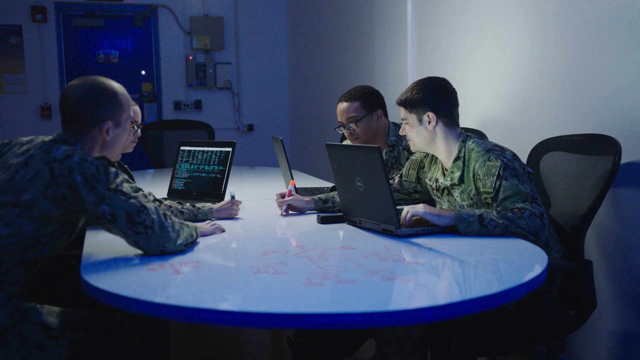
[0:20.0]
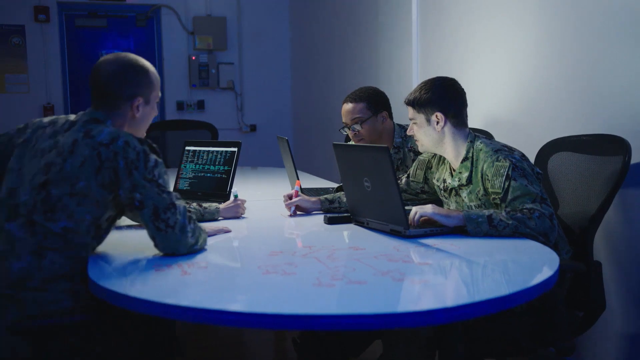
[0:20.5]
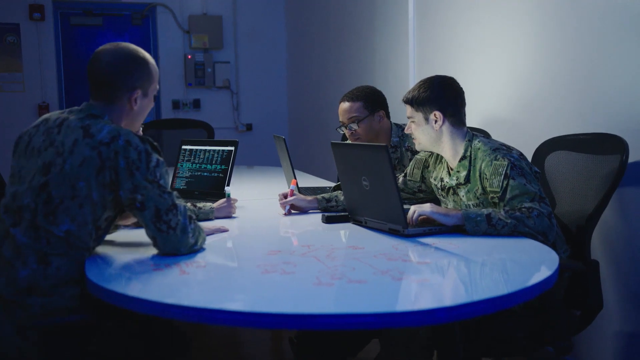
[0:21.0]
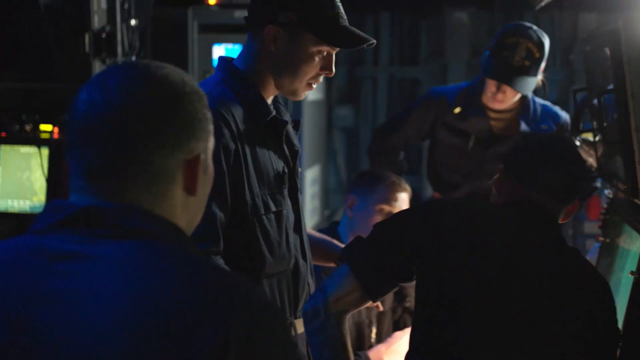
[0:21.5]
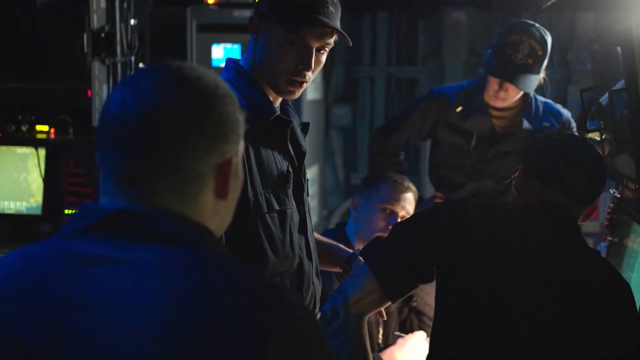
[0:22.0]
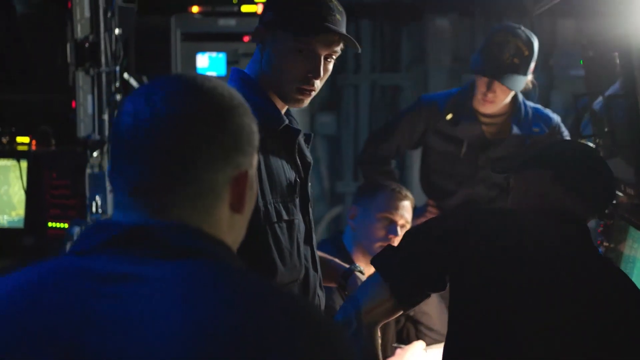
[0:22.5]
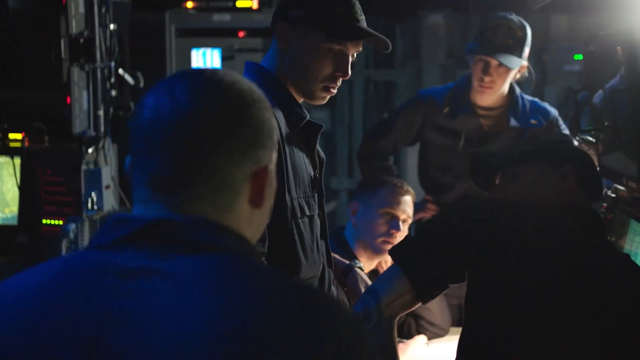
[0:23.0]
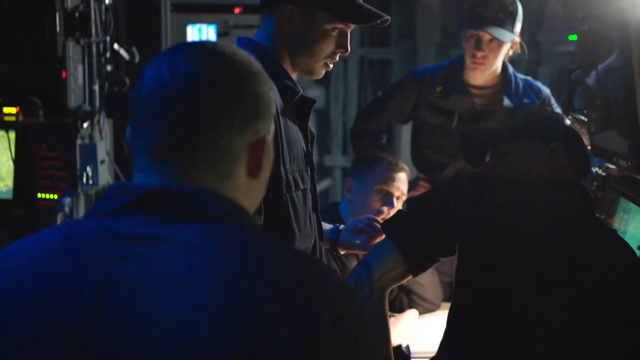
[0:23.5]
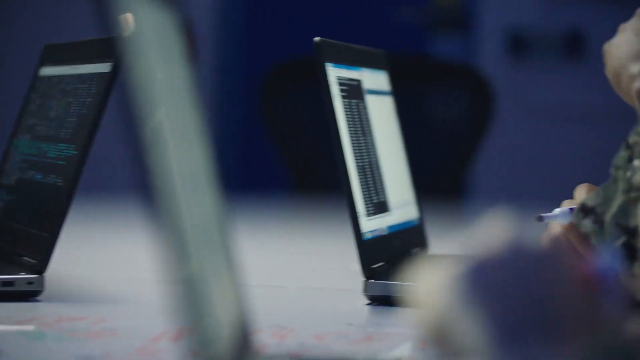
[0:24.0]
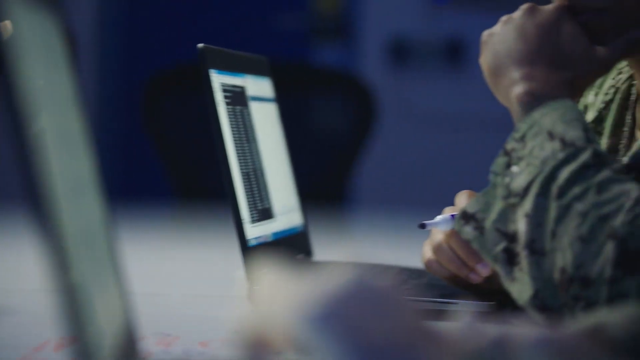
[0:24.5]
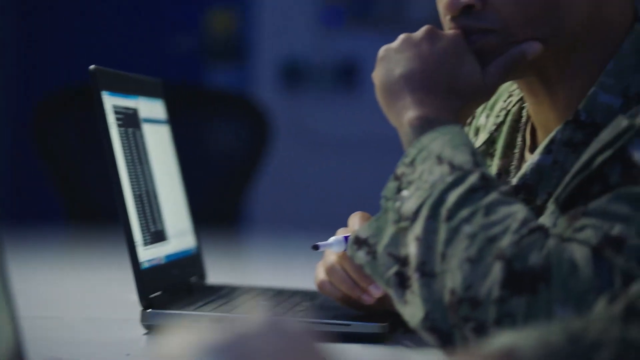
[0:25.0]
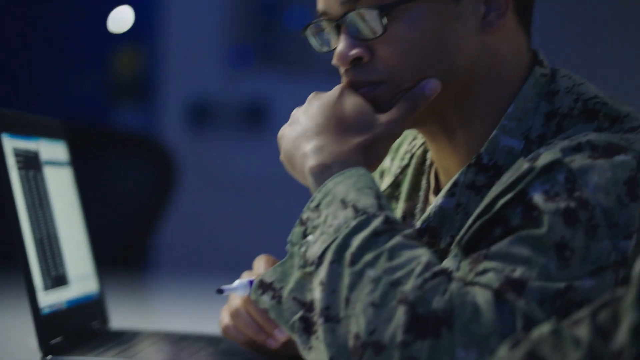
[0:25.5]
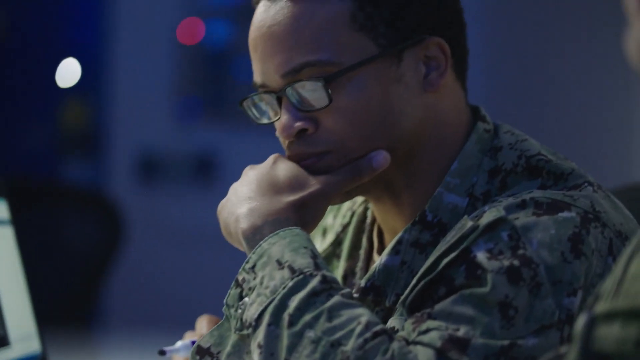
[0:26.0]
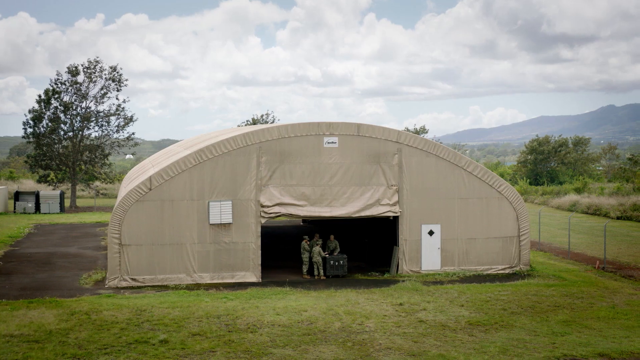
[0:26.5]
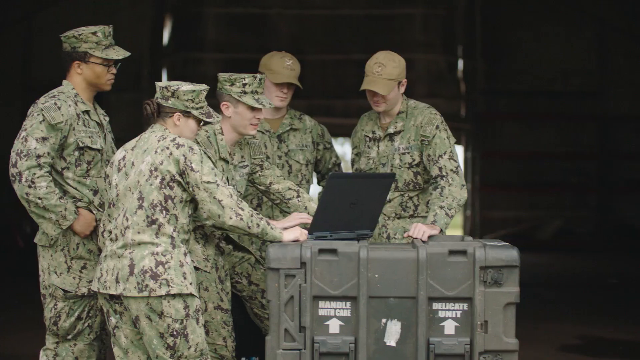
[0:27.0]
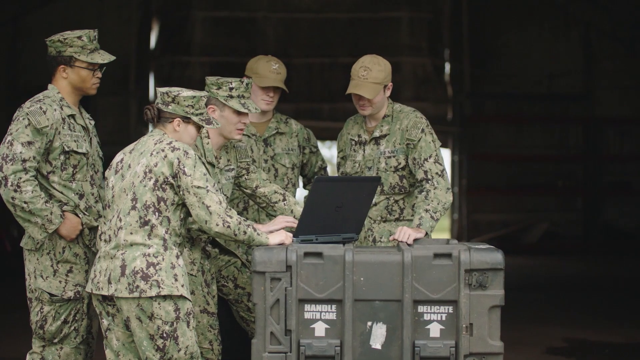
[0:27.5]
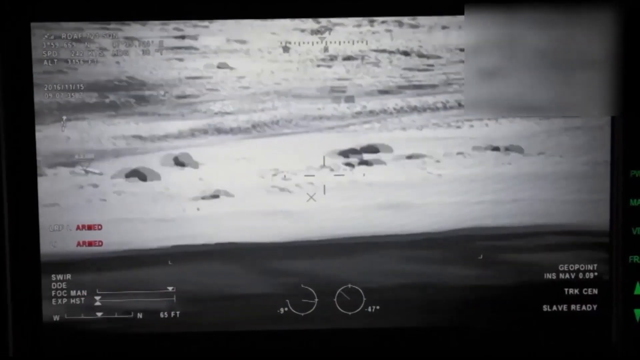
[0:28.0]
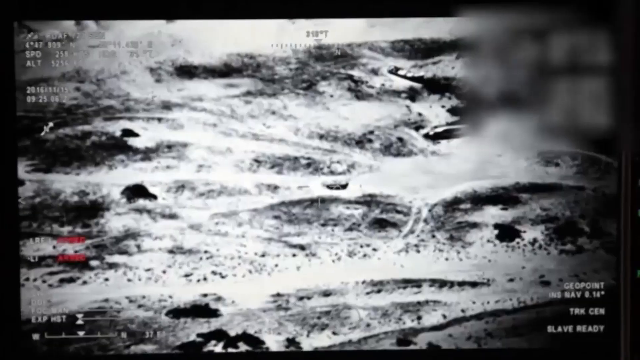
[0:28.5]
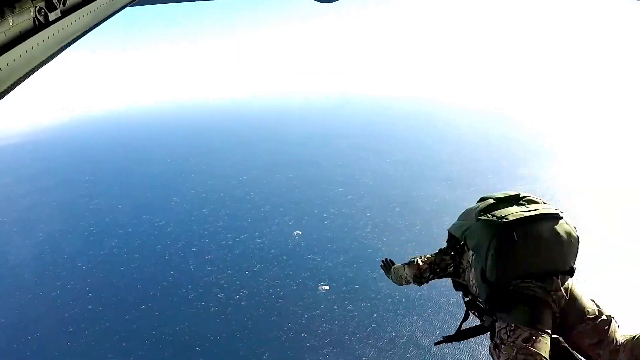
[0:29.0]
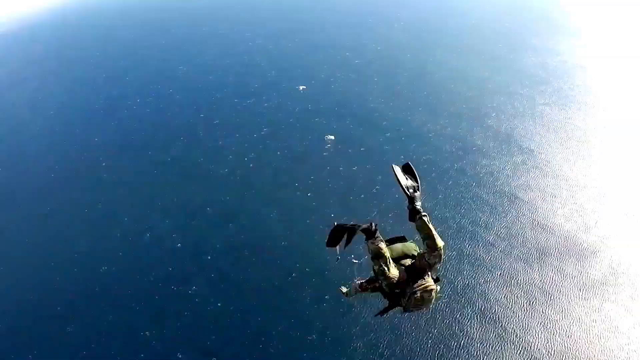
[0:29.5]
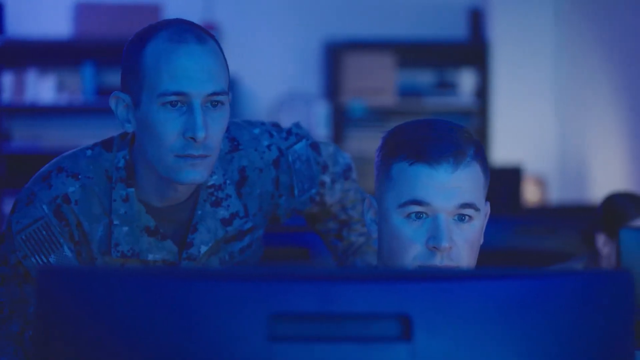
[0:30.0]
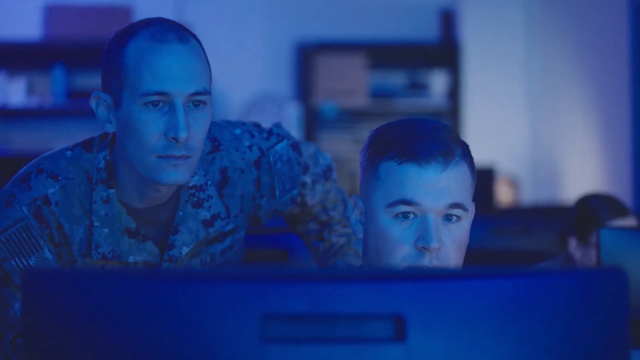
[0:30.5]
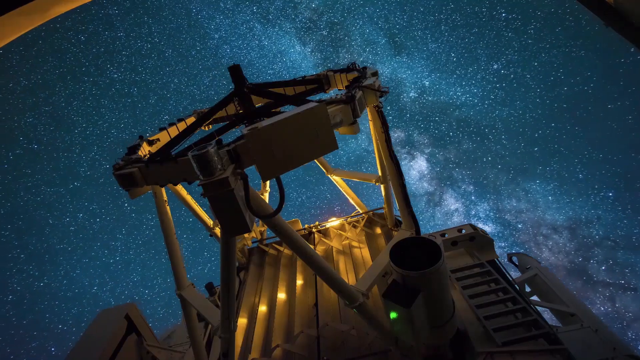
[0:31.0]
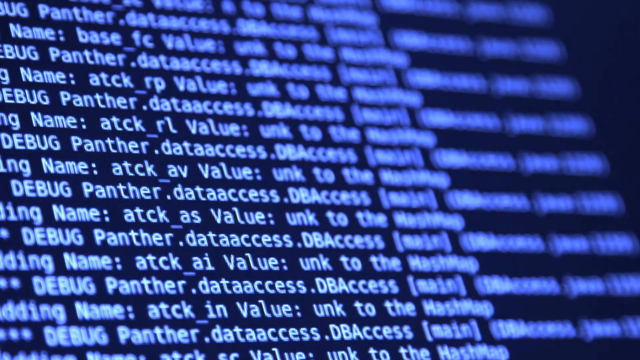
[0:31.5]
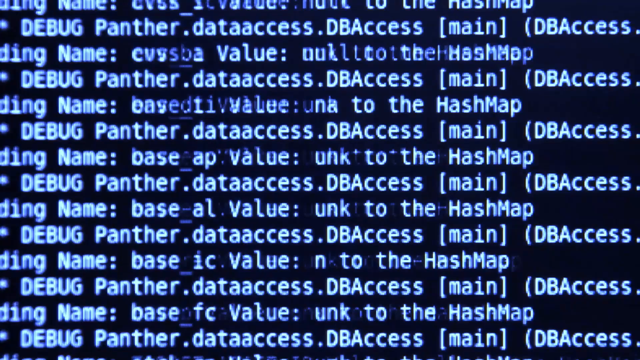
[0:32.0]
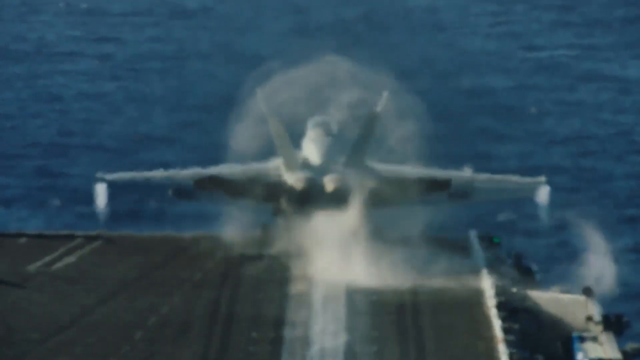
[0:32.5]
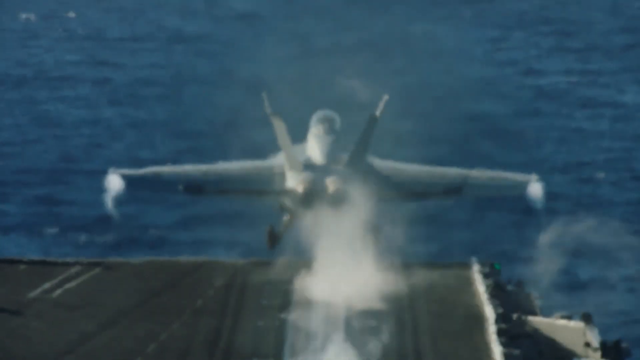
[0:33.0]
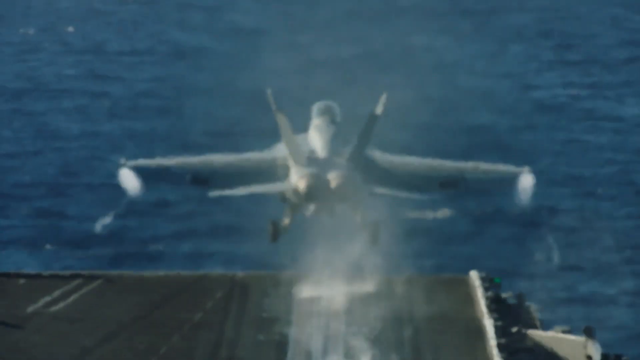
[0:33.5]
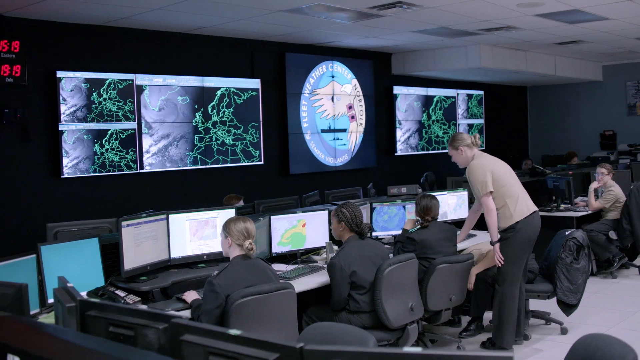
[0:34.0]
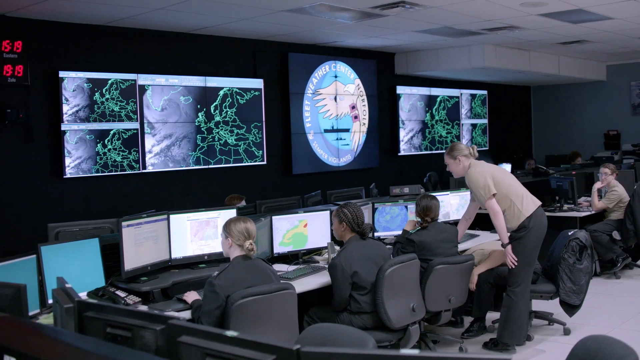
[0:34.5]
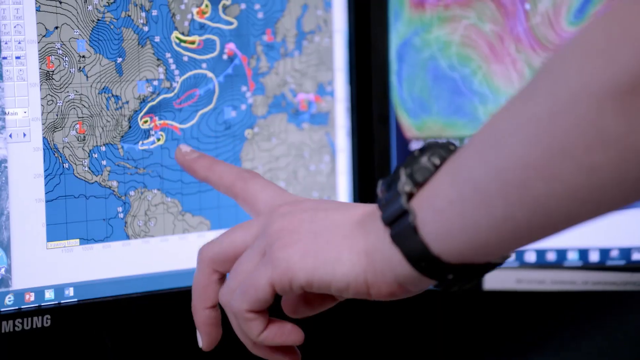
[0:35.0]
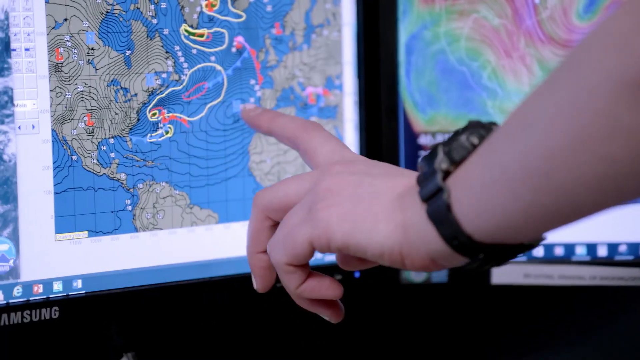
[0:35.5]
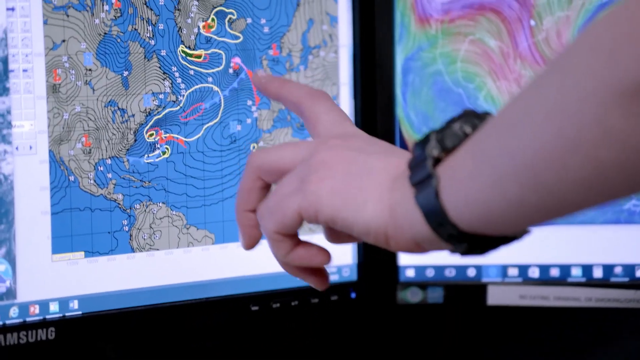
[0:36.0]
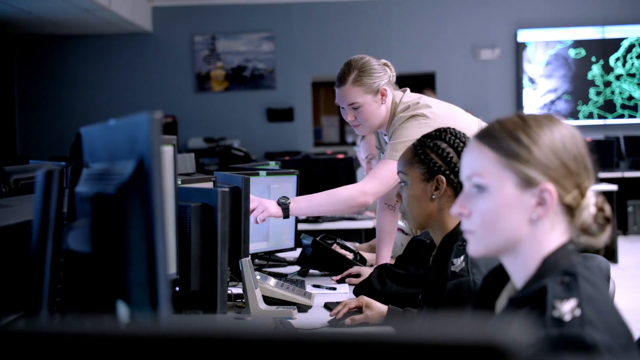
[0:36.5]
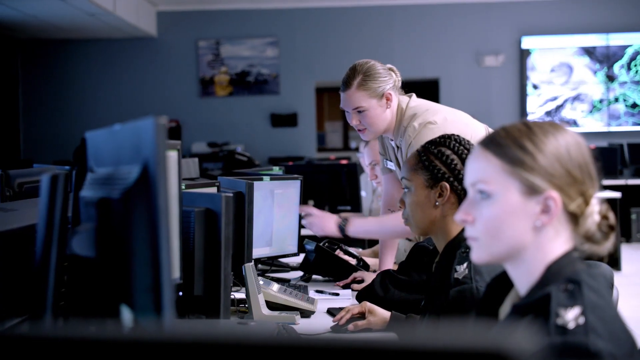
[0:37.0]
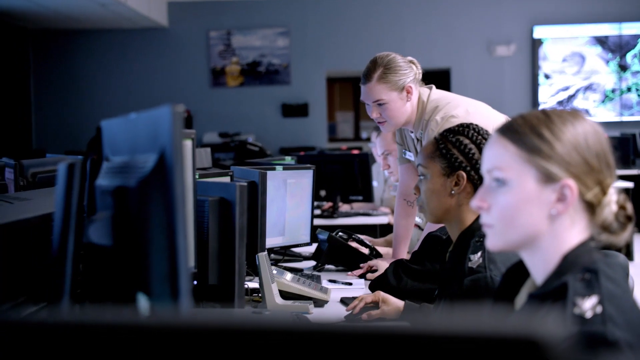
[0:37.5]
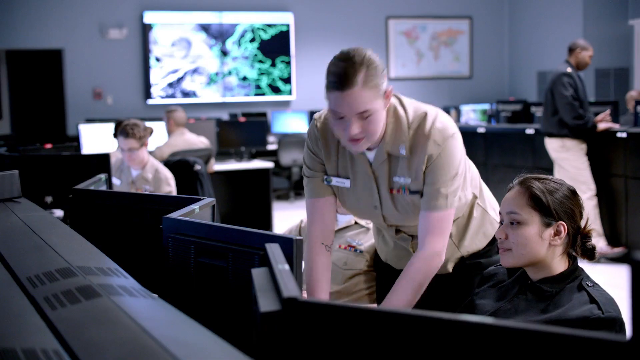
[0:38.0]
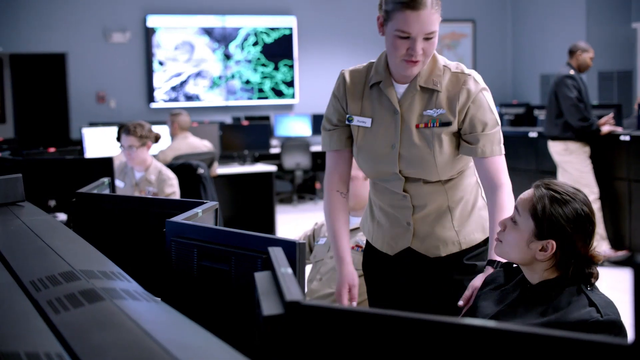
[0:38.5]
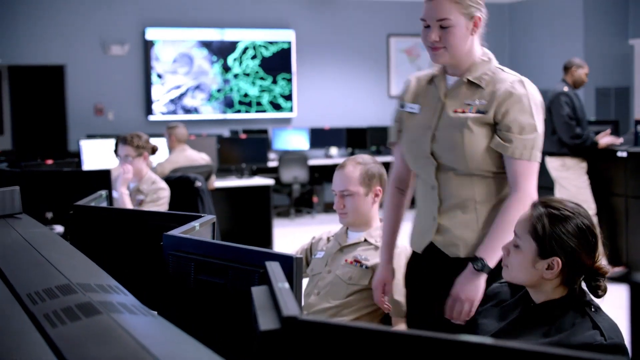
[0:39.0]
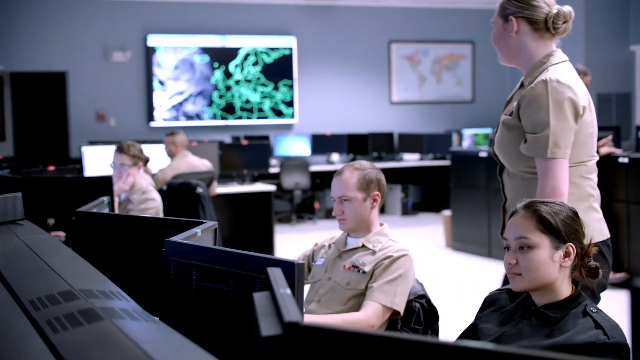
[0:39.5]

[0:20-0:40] Several military-looking men sit at computers. Of three men, one is a Black man wearing glasses who looks at a computer and puts his right hand on his chin, looking inquisitive; the other two are white. The video cuts to more men, then to a quick shot of what looks like a beige tent. Inside the tent, five people in military gear and camouflage suits look at a computer, and the screen shows things like people jumping on a plane. Two men stare at a blue screen that casts a reflection on their faces. A satellite appears, a plane takes off, a finger points at a screen, and a blonde woman in a beige shirt is shown. The cuts come quickly.